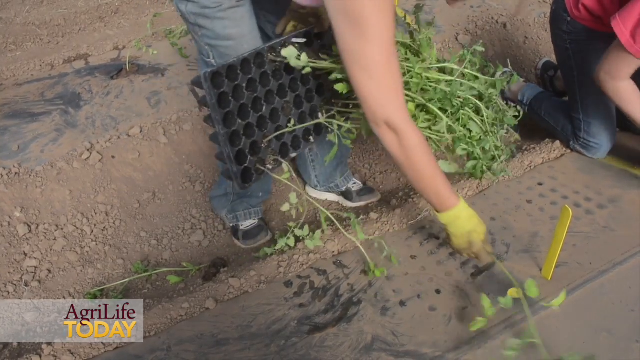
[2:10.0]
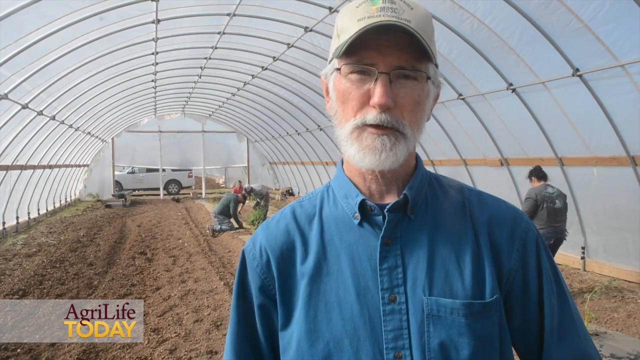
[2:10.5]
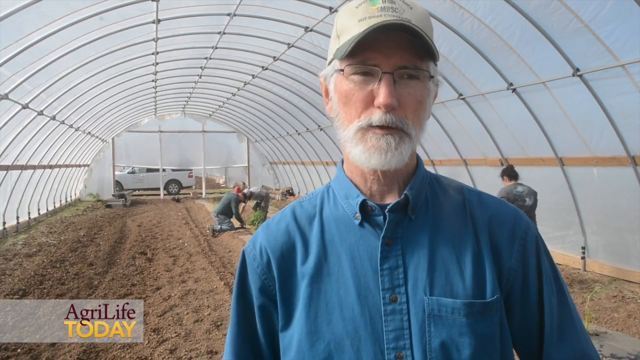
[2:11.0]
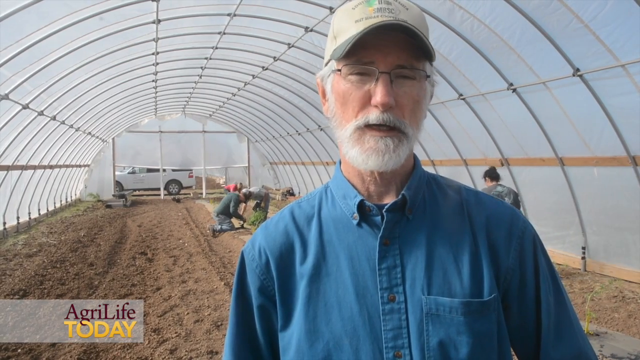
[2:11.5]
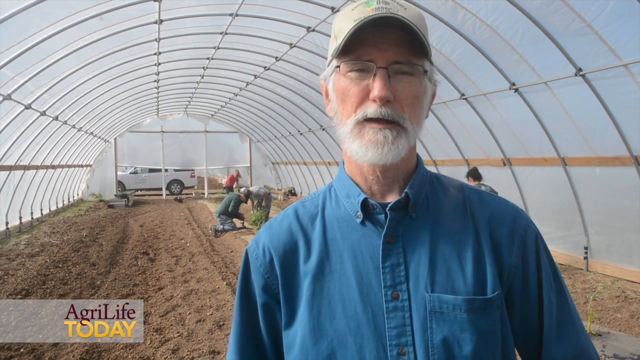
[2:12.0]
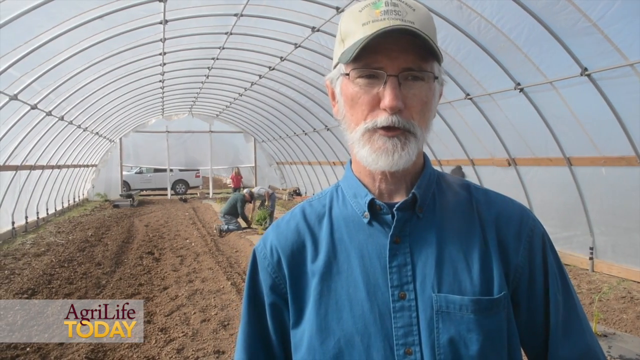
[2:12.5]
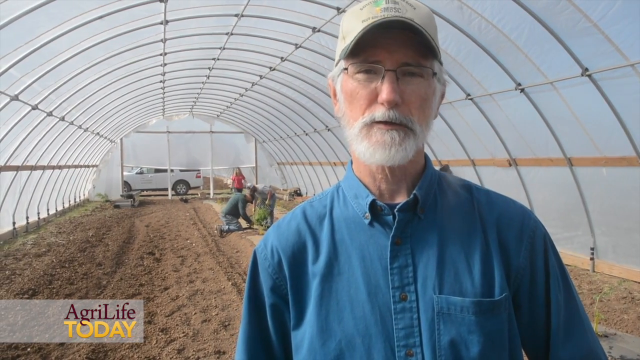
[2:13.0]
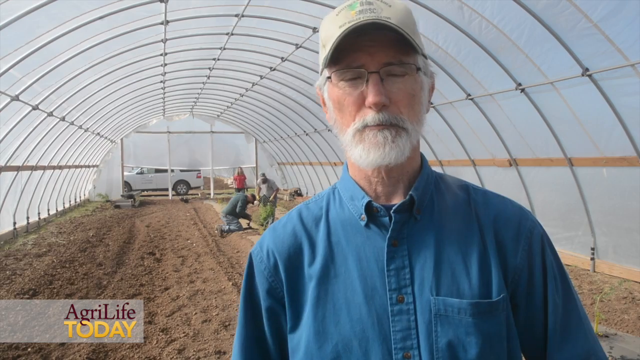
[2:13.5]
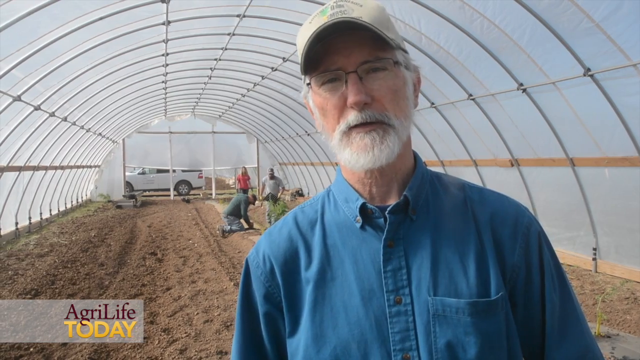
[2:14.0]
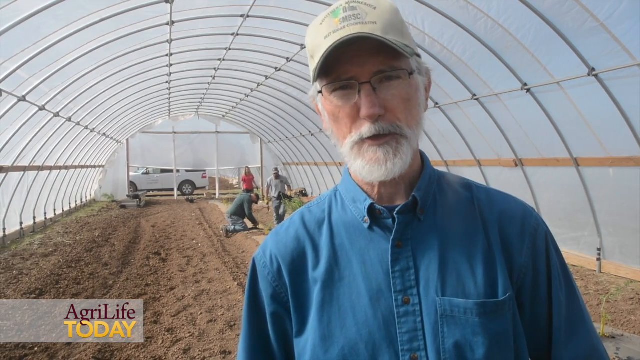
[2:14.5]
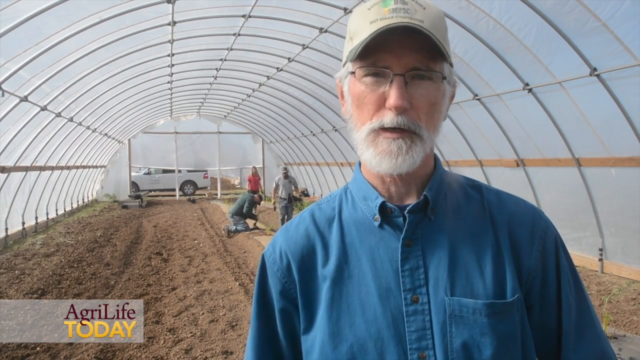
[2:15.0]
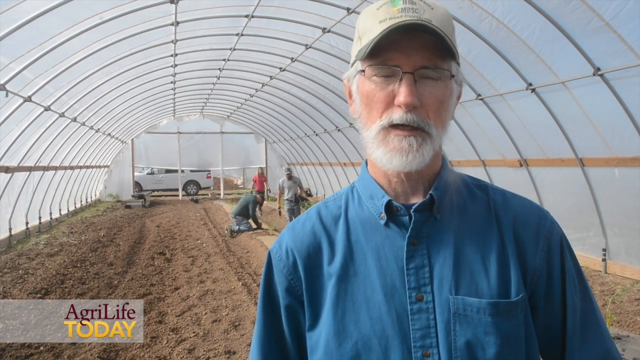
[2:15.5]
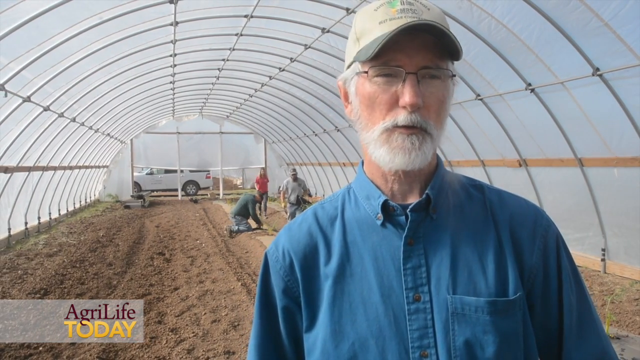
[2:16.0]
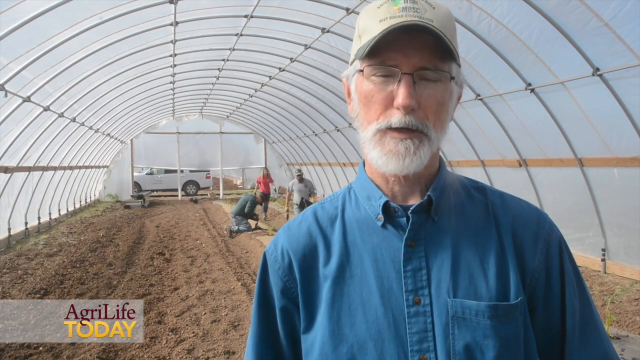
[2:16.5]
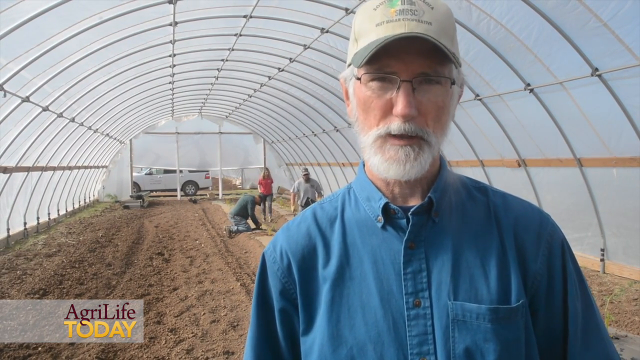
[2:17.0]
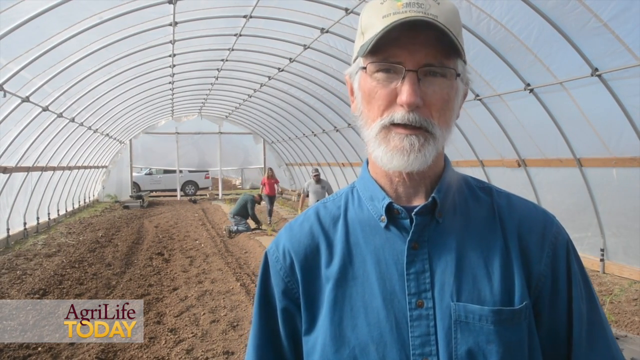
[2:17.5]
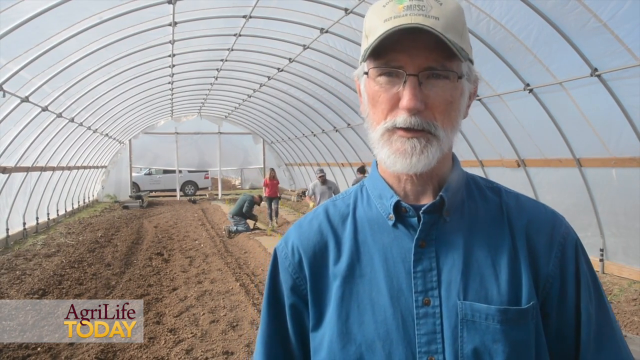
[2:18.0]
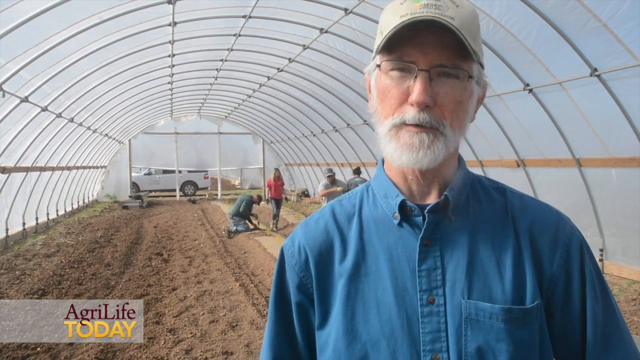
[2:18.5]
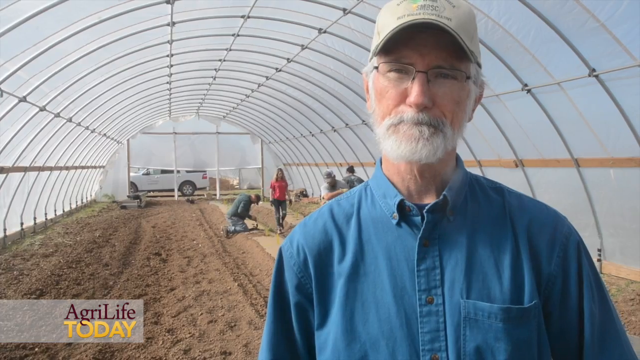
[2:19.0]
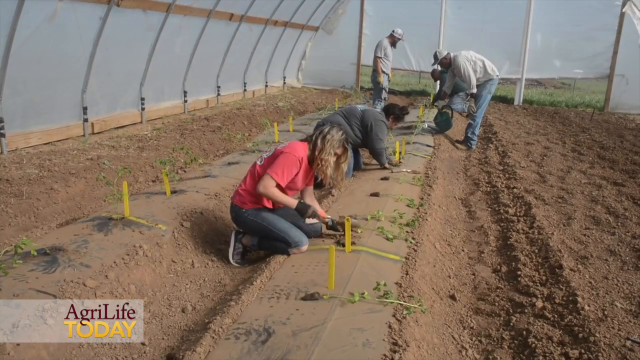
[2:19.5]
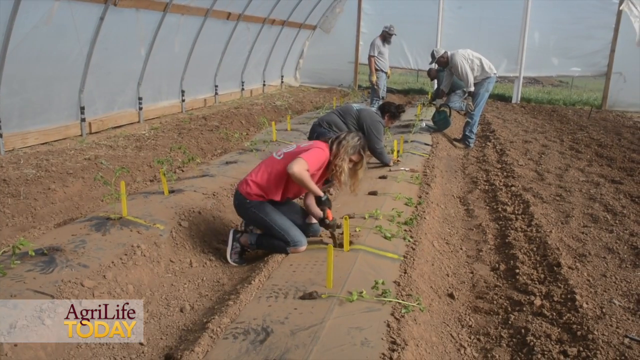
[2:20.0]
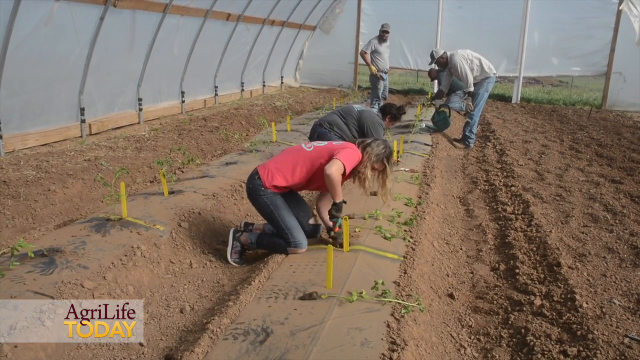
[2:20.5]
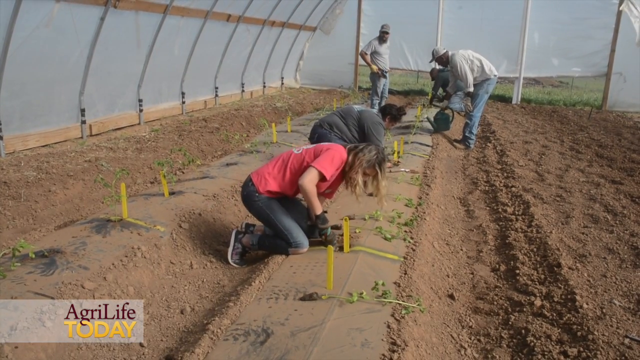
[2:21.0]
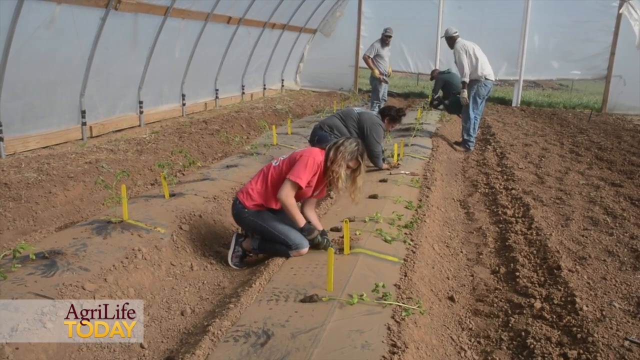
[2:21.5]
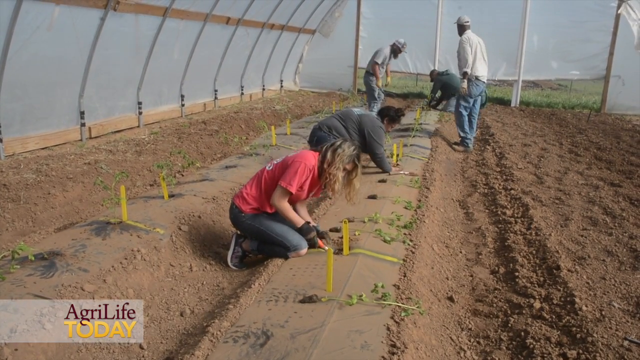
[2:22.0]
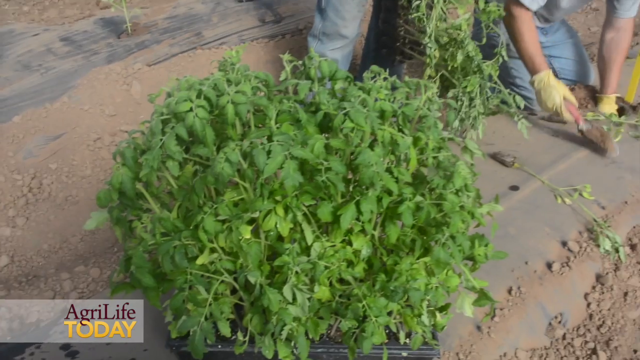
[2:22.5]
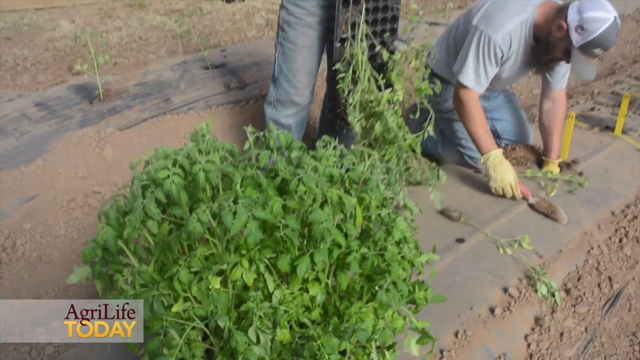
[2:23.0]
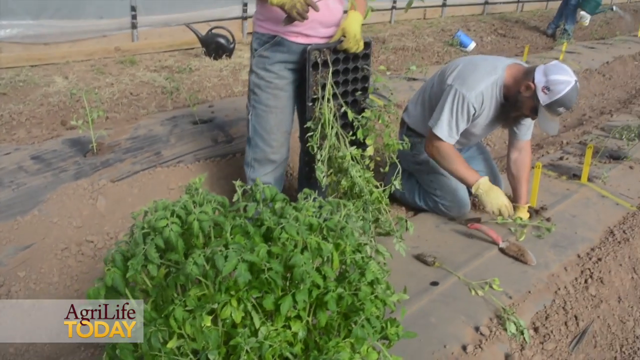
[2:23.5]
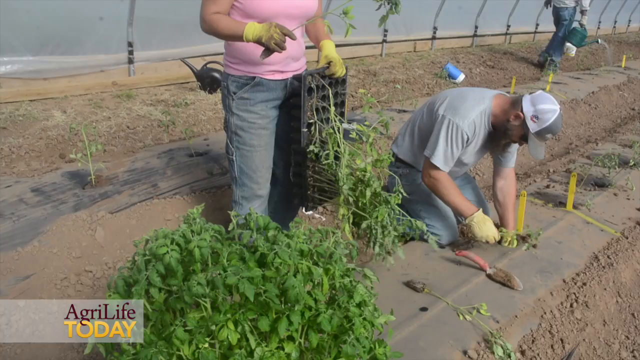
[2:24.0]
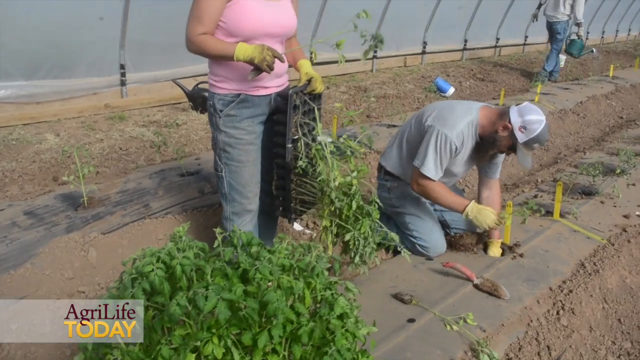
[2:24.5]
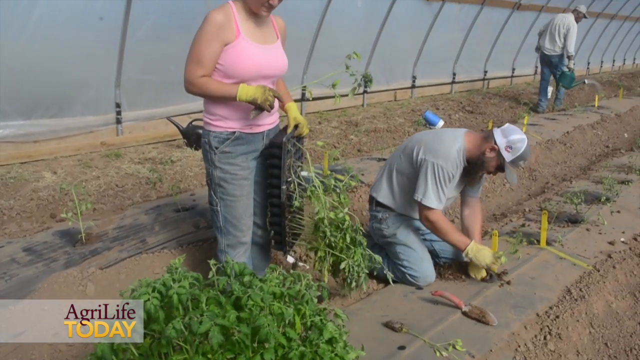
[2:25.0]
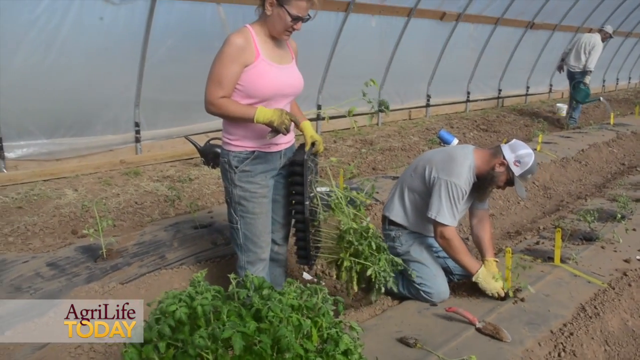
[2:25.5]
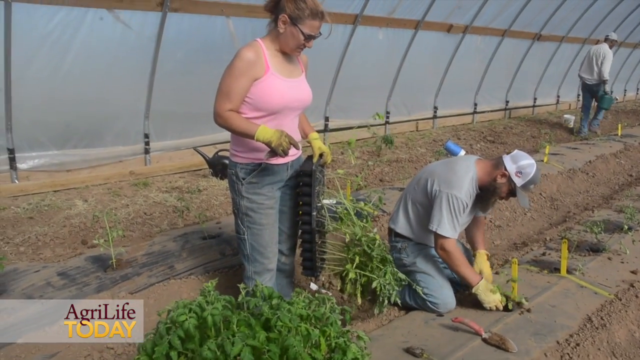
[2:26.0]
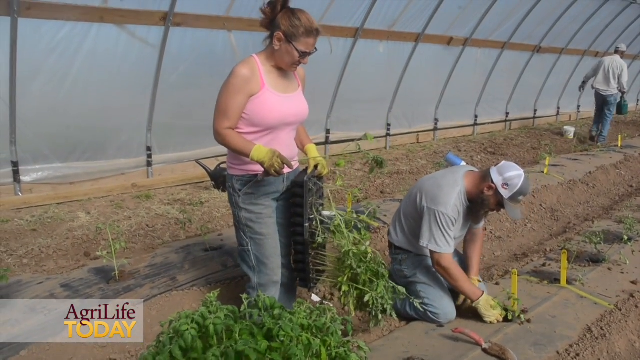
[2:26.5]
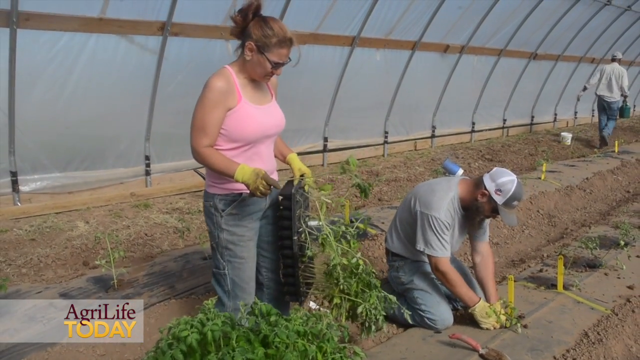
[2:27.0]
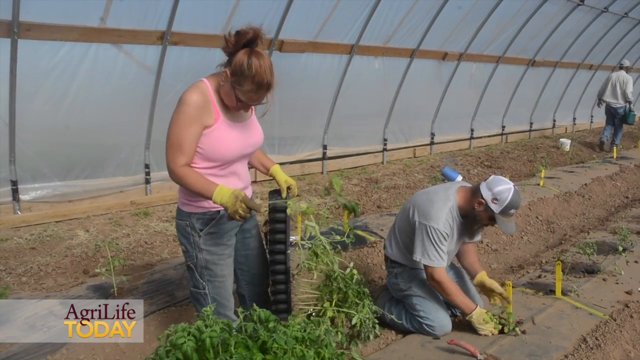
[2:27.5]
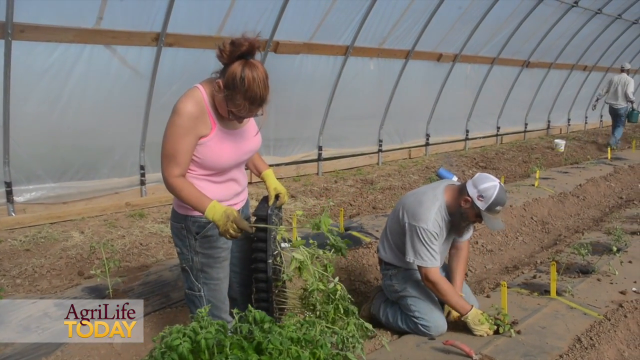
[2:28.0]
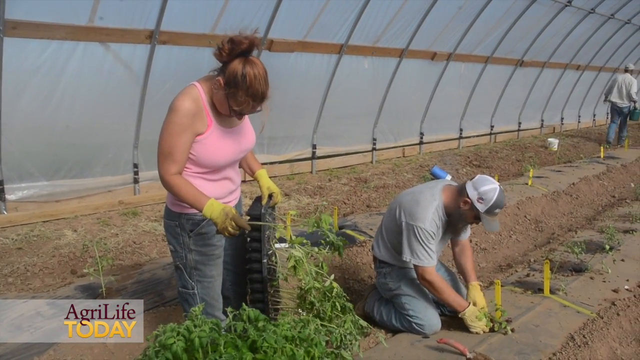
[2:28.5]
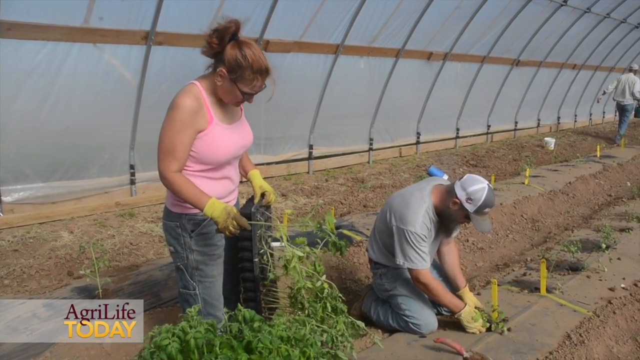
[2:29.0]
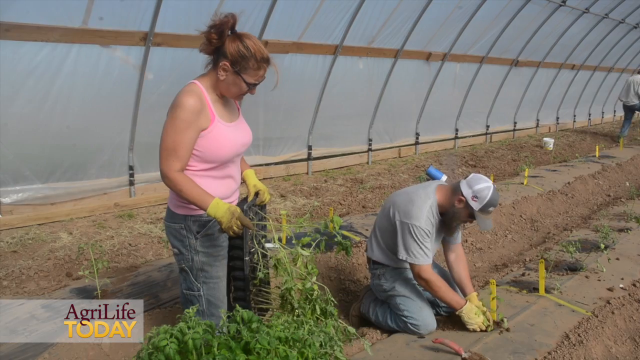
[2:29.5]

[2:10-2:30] An older man talks to the cameraman. He wears a blue shirt with a button undone at the top and a cream baseball cap whose peak looks to be brown, and he has glasses, a beard and white hair. He is standing inside a greenhouse, and people move around behind him, looking like they are planting plants in the soil. A white four-wheel drive is also in the background. The video then clearly shows three women and two men planting tomato plants in the soil, working together; they seem to be separating the plants with yellow sticks in the ground. The woman at the front wears a pink t-shirt, blue jeans and trainers. The other woman wears a pink vest and blue jeans, and has glasses and red hair. A woman then pulls plants out of little pots and plants them in the designated planting area.